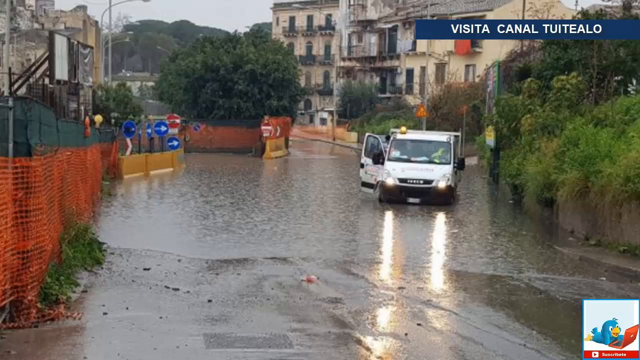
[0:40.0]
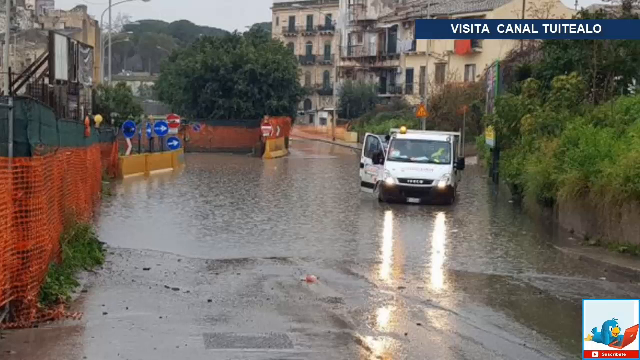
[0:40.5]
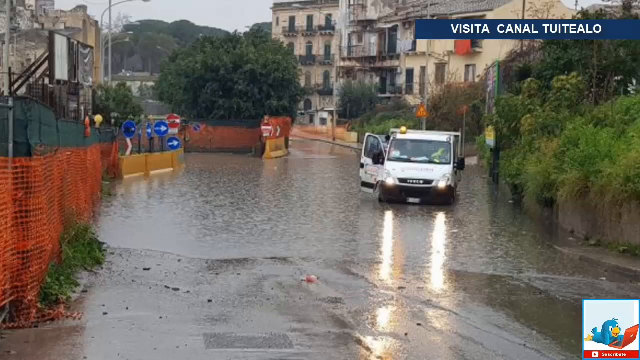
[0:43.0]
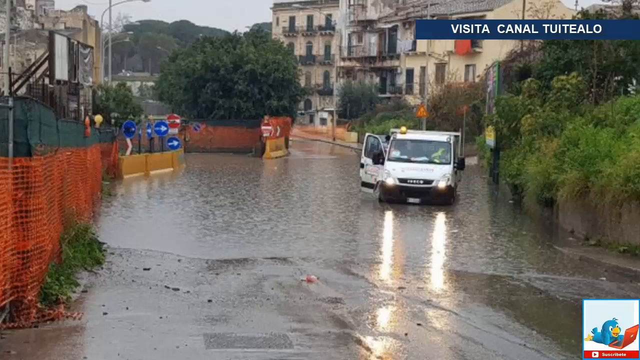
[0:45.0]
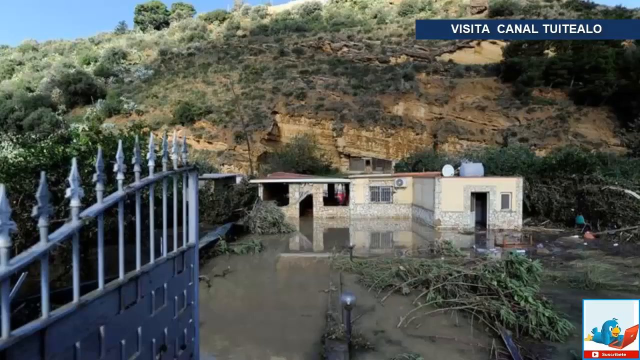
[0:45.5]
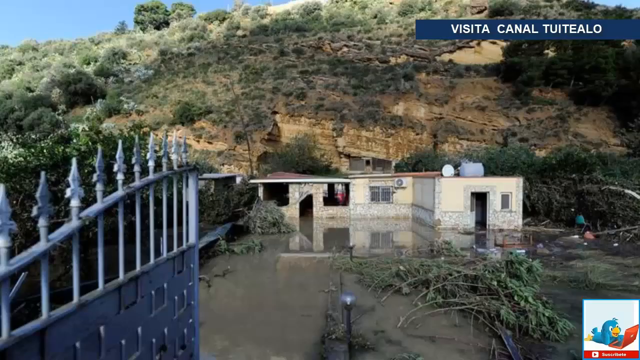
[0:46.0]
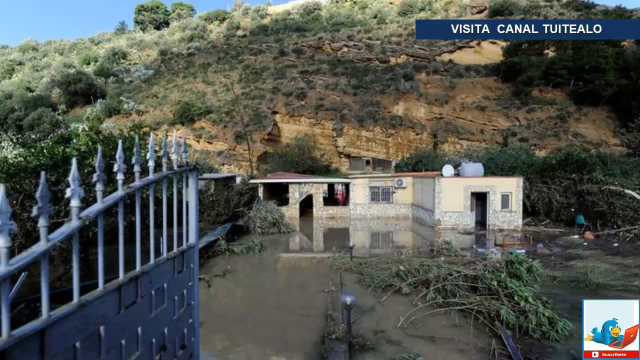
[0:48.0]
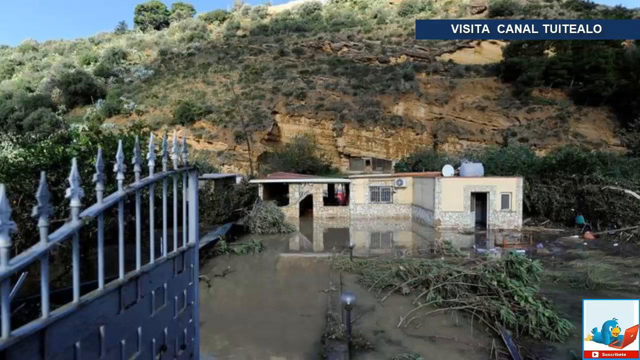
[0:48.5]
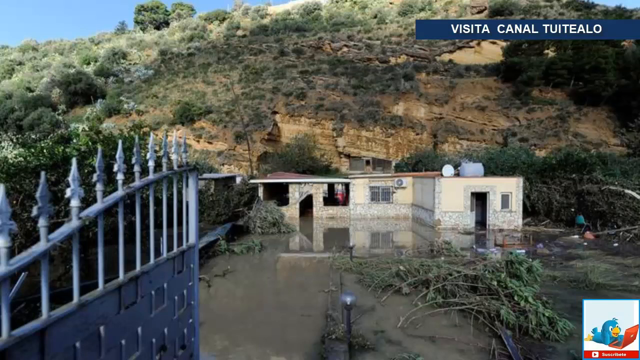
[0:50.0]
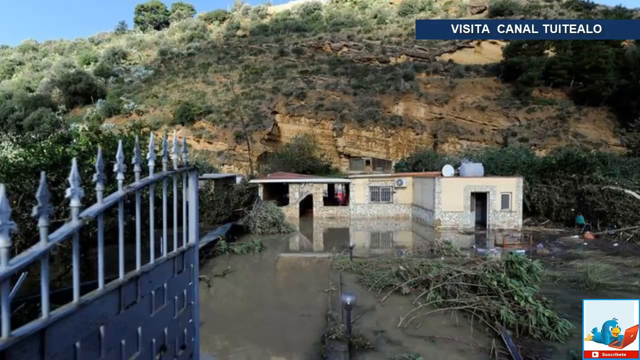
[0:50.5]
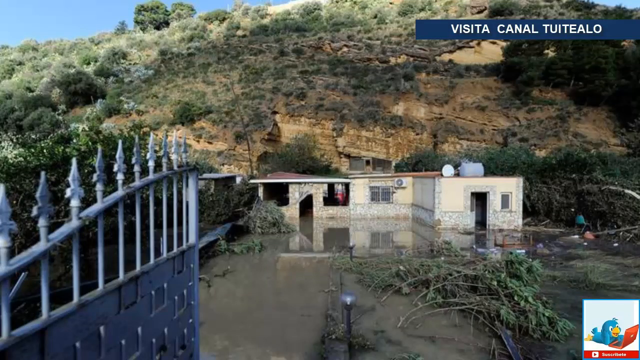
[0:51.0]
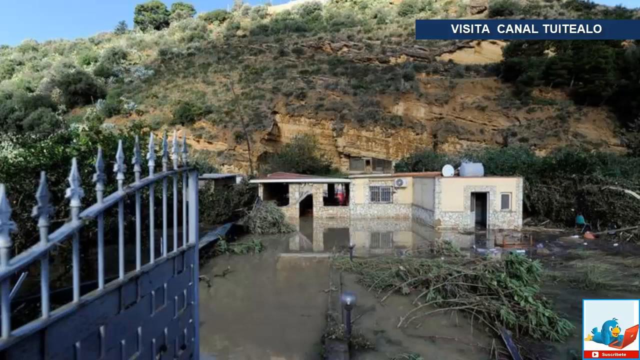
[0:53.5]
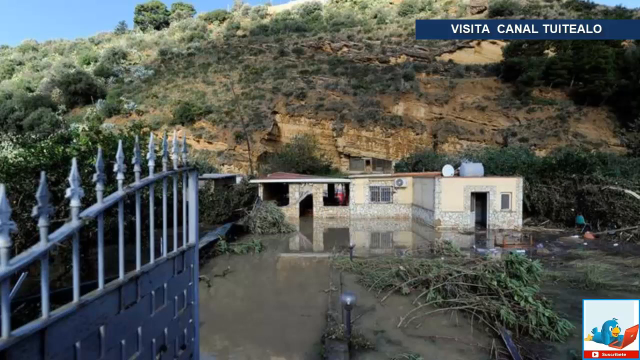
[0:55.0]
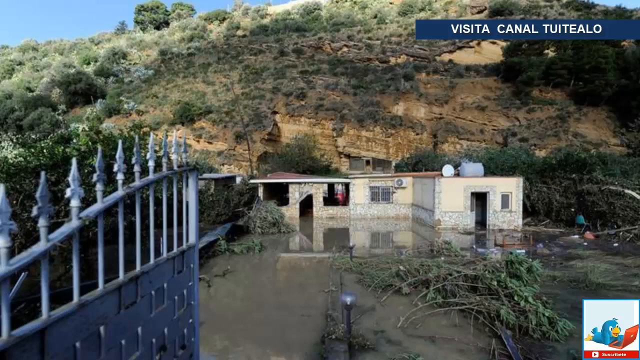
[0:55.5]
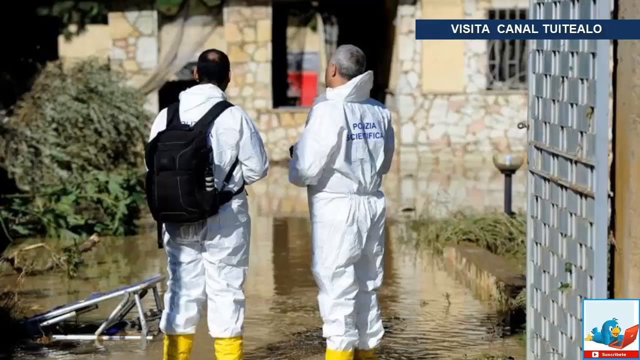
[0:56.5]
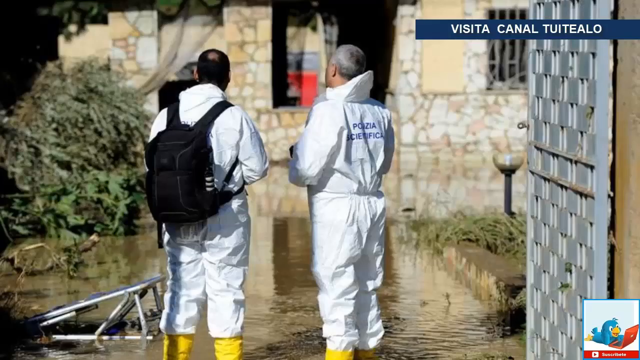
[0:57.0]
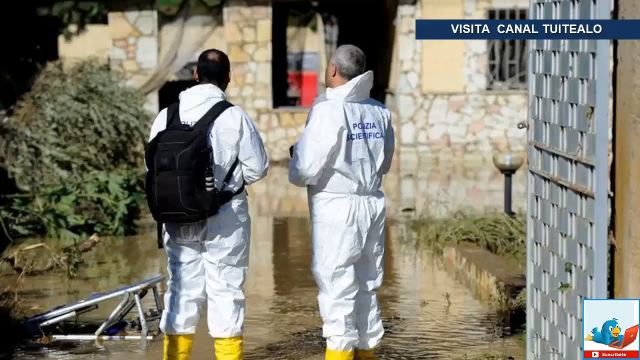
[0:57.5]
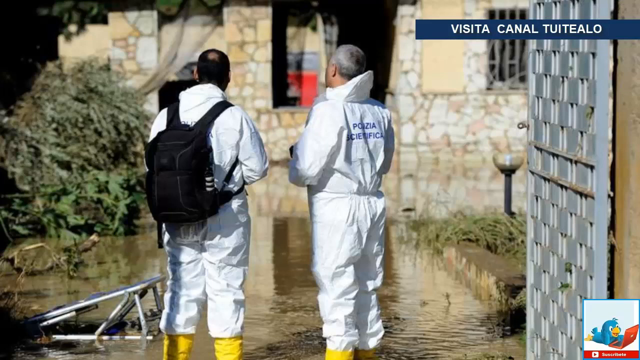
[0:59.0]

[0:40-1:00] A white van is parked in a flooded-out road. Its headlights are on and reflect off the water on the flooded part of the road. To the left is an orange fence, apparently a safety fence, and at its end are several blue road signs with arrows pointing to the right, with some red road signs to the right of the blue ones. Trees and vegetation grow on either side of the road. To the right of the van, on the lower part of the roadway, there is a concrete wall. Next, a home in a little valley is shown flooded out, with the floodwaters all the way up to the home and going up the sides of its walls. Behind the home is a big canyon area with cliffs going up a steep hillside. Then two men stand in a flooded roadway wearing white suits, one with "Polizia" on the back. They are apparently policemen surveying the flood damage, and they are looking at a home that looks flooded out. Their feet are in water, and bushes and vegetation grow on either side of the walkway they stand on.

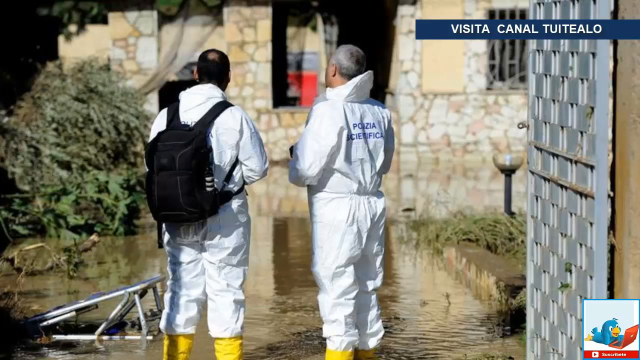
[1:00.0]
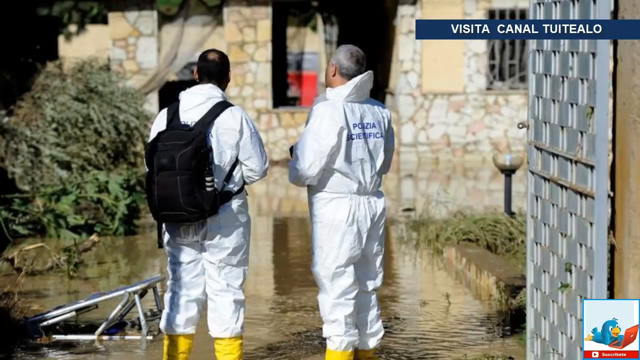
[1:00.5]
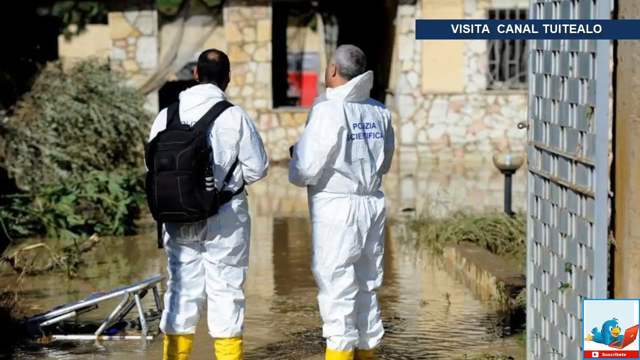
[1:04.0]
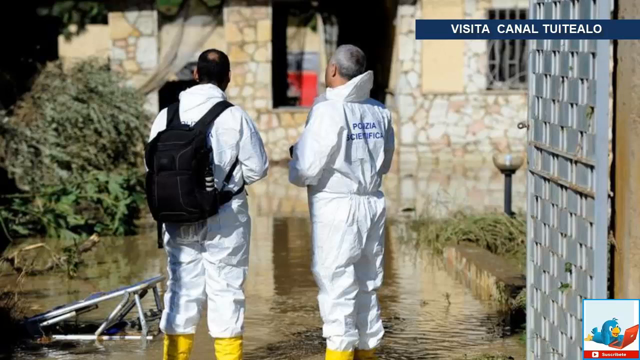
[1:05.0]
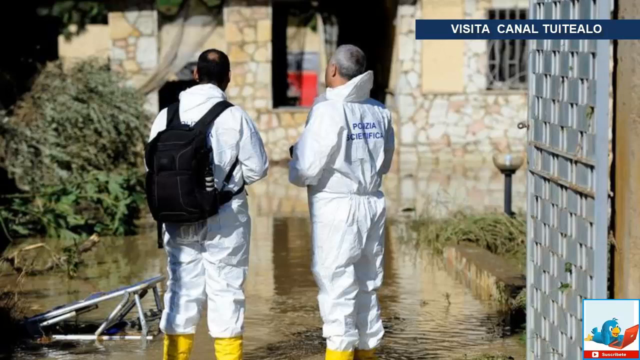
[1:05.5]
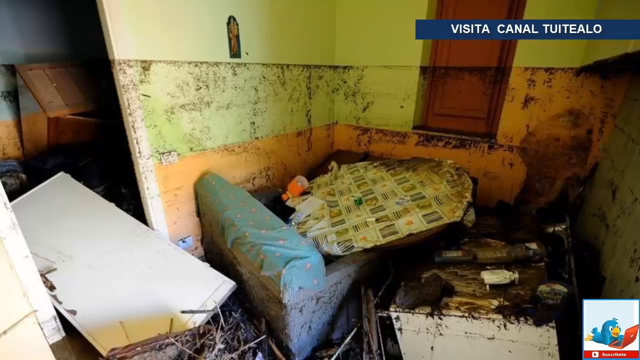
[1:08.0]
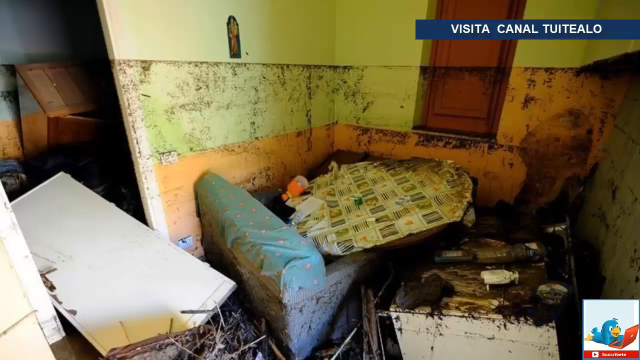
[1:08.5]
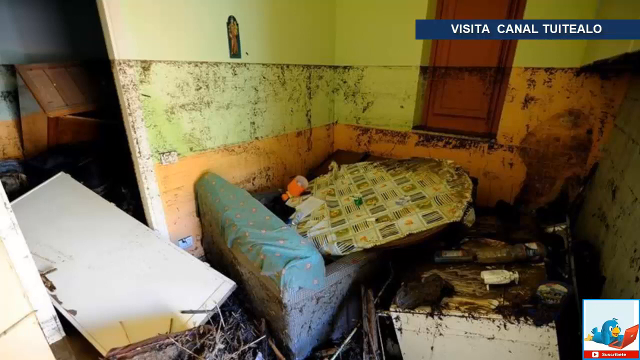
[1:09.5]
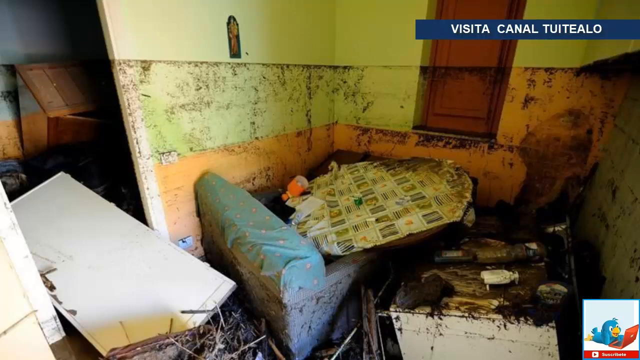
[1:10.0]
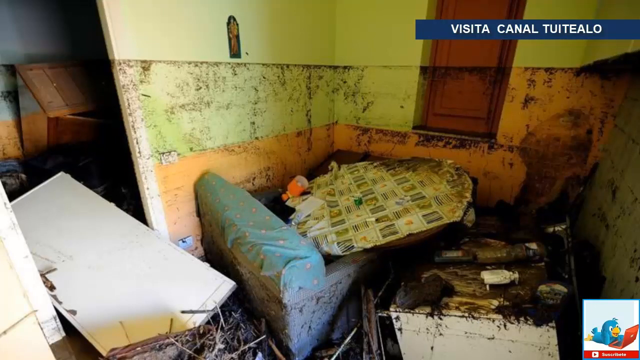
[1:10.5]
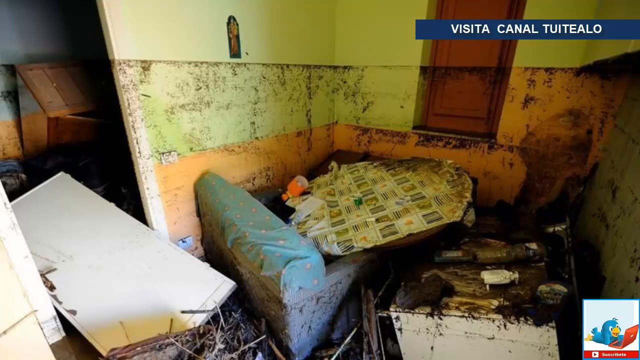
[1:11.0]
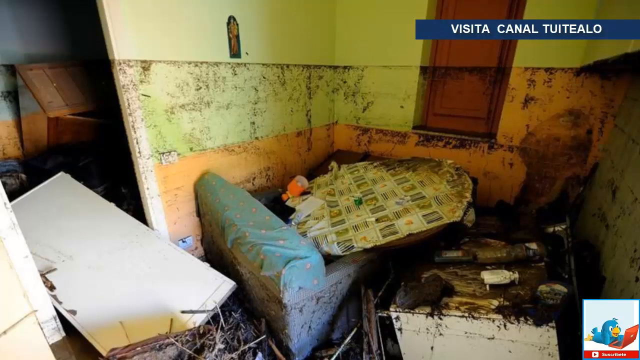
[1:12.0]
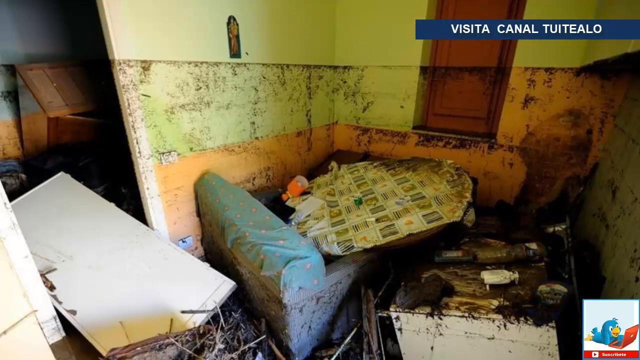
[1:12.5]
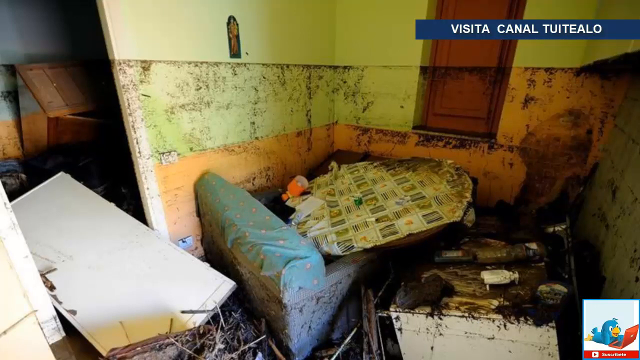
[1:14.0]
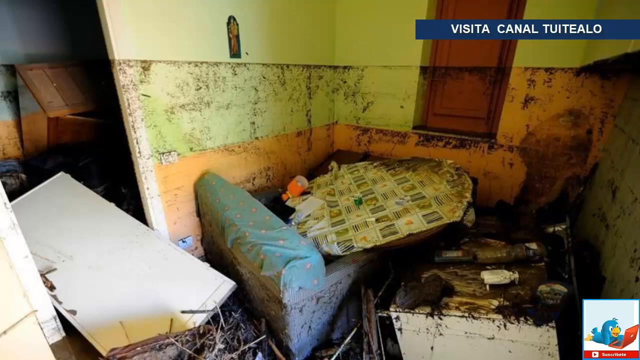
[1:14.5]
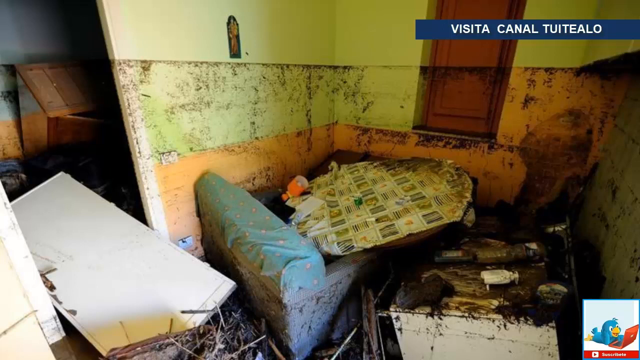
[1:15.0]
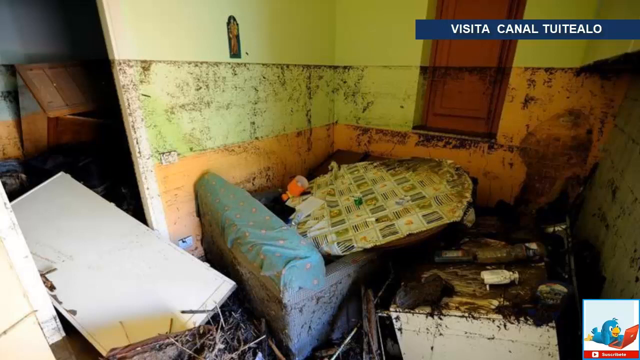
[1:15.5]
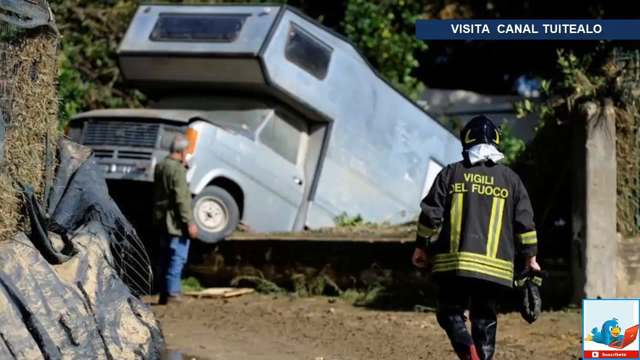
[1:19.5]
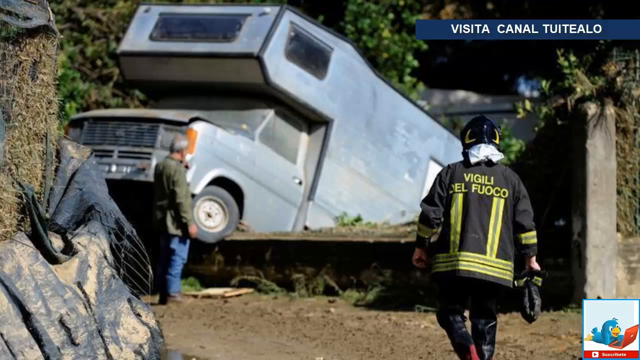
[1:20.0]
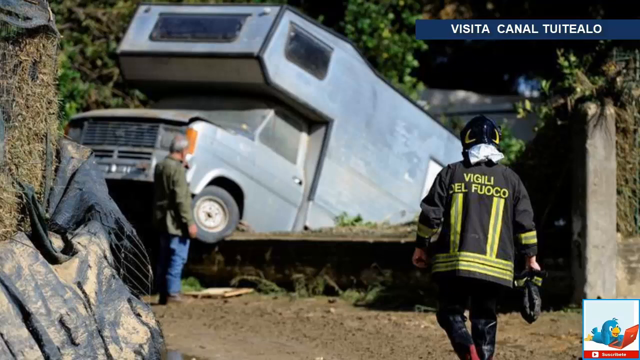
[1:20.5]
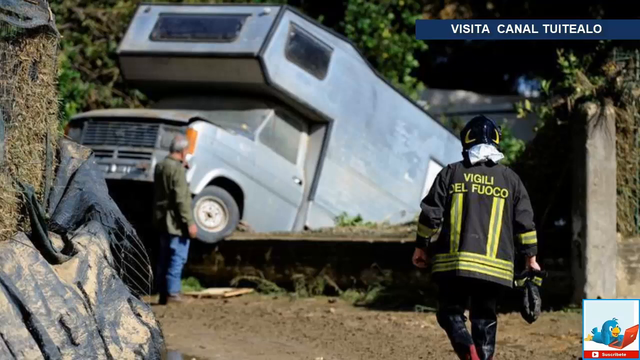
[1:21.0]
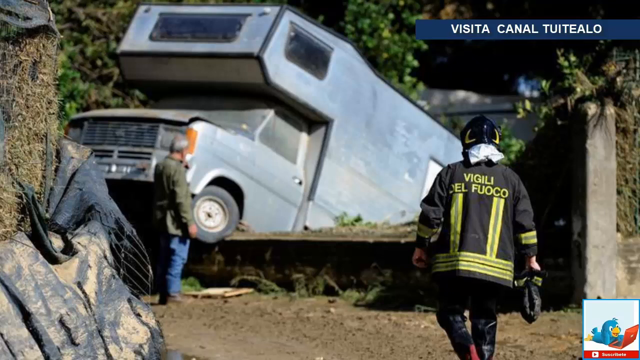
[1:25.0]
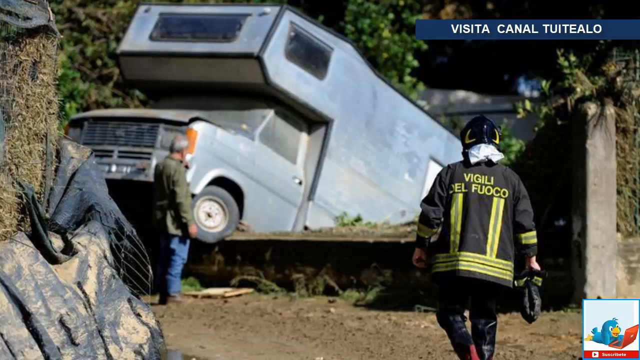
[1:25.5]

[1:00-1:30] Two people stand in a flooded roadway. The man on the left wears a black backpack, both wear white jumpsuits, and the man on the right has "Polizia" on the back of his jumpsuit. They are policemen standing in the floodwaters surveying the damage. Next, the inside of a home is shown destroyed by the floodwaters; there is furniture, and it looks like doors have fallen. Then a large RV, or recreational vehicle, is stuck in some type of ditch, standing up with its front wheels off the ground. A man stands in front of it surveying the damage, and a man in a fireman's outfit walks up on the right side. The back of the fireman's outfit has Italian writing; the top word says "vigili", followed by two more words.